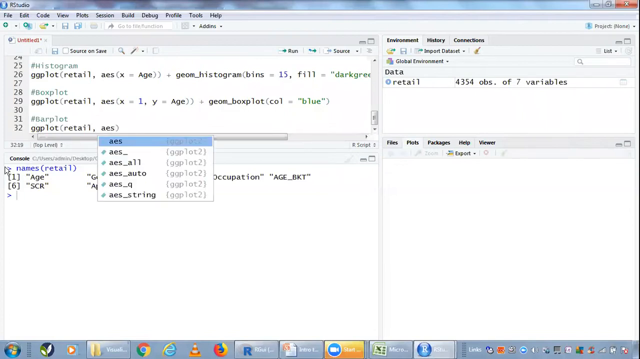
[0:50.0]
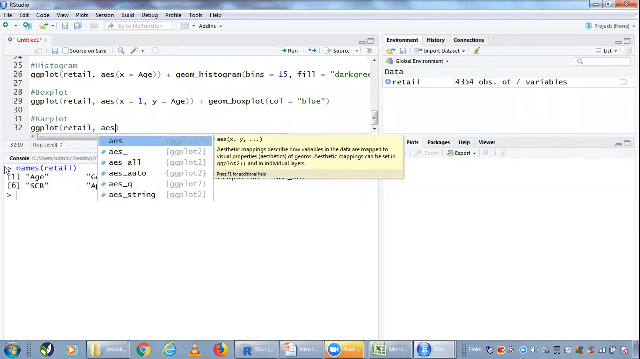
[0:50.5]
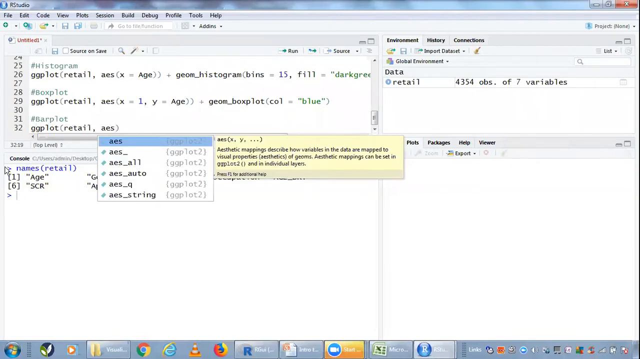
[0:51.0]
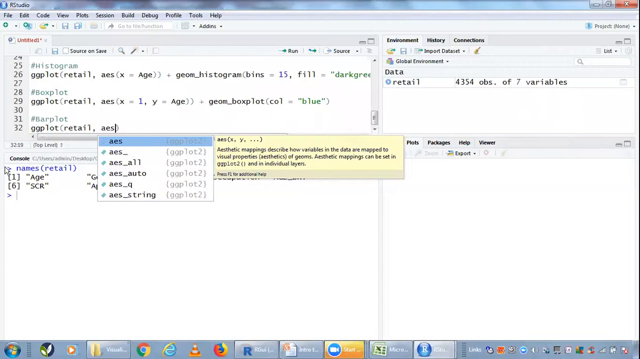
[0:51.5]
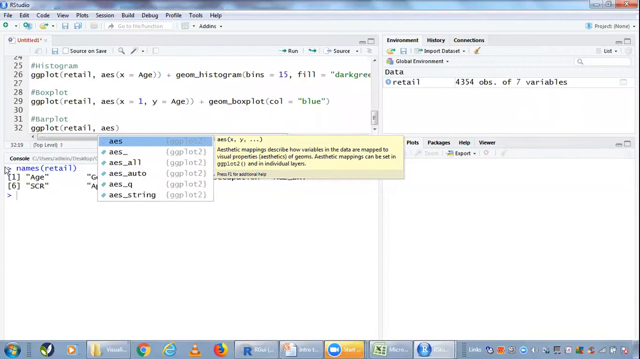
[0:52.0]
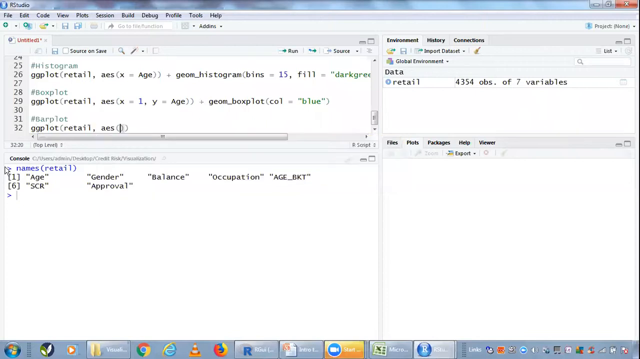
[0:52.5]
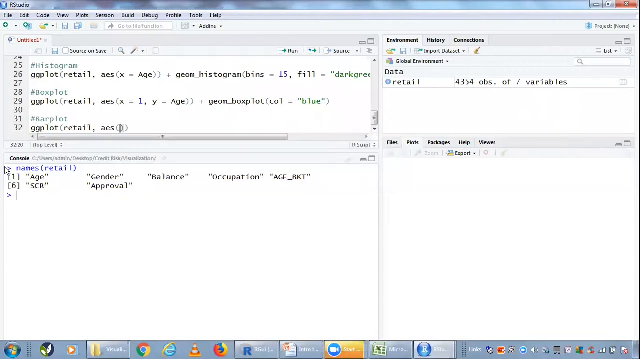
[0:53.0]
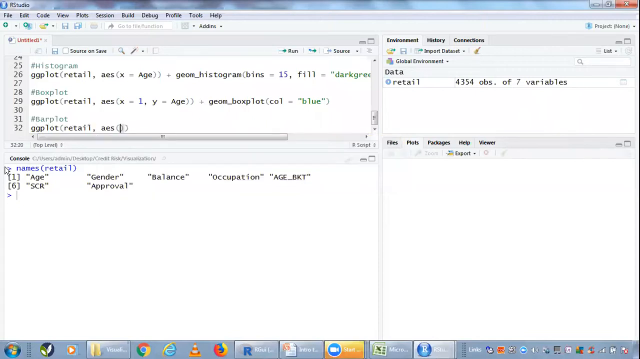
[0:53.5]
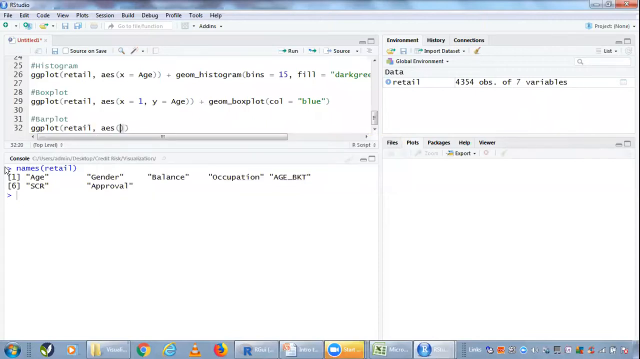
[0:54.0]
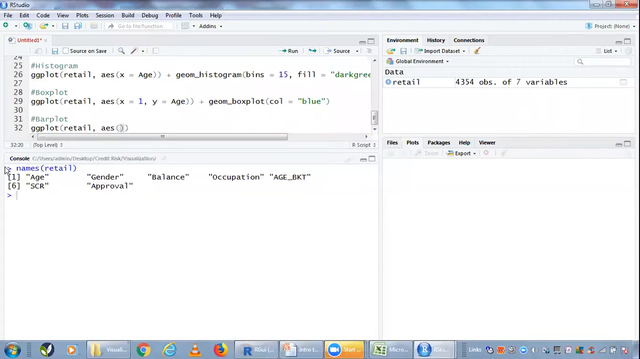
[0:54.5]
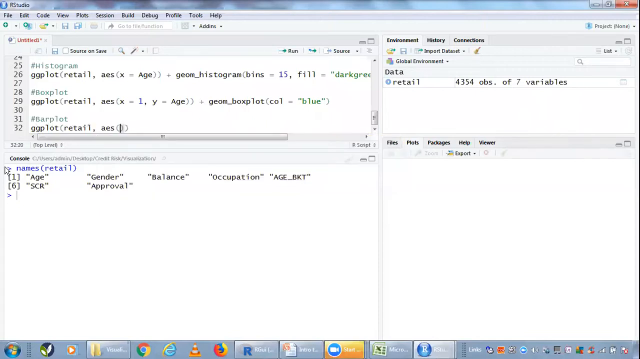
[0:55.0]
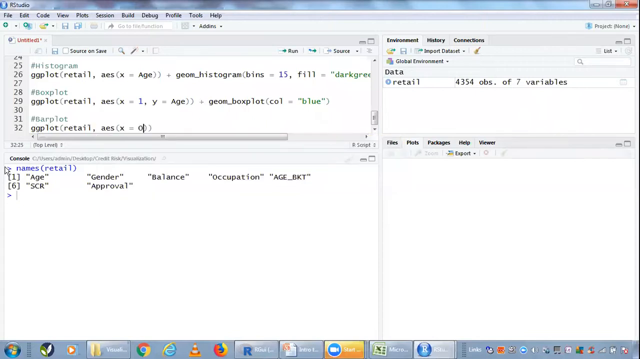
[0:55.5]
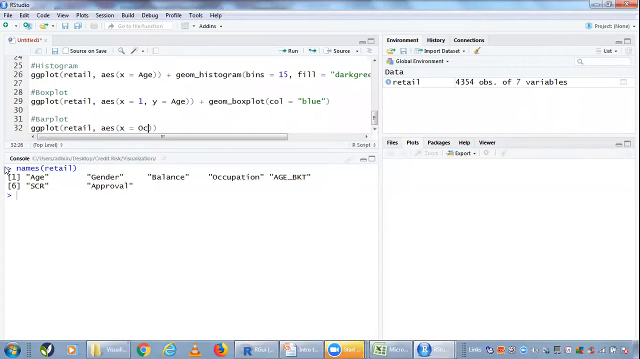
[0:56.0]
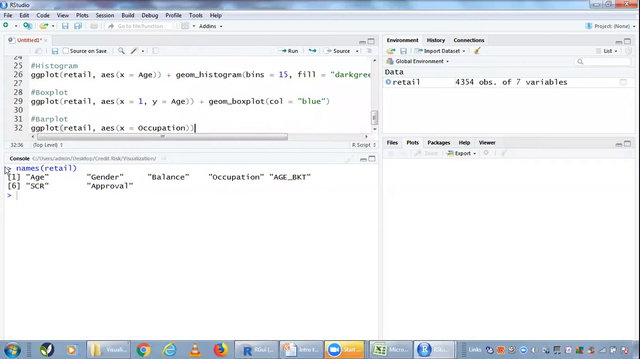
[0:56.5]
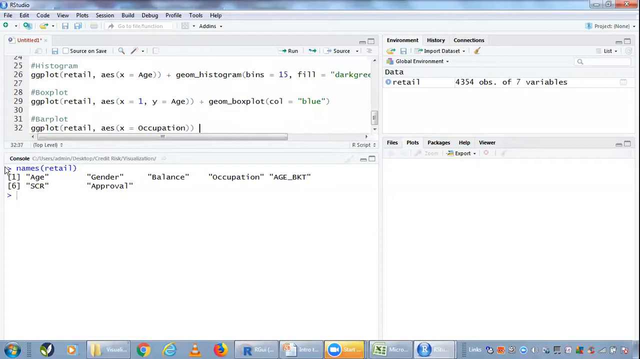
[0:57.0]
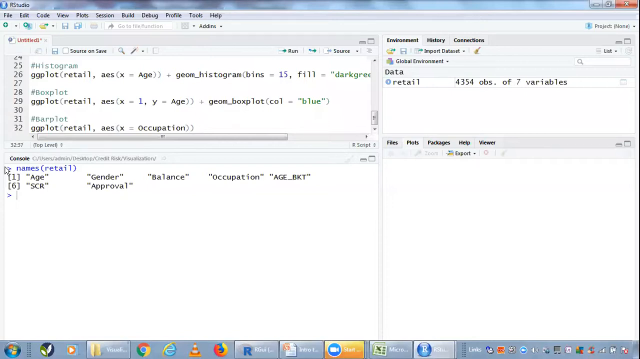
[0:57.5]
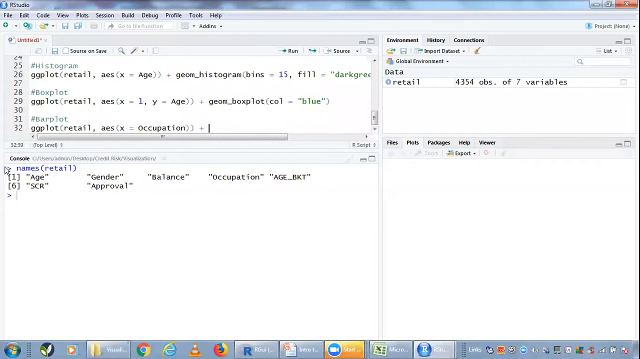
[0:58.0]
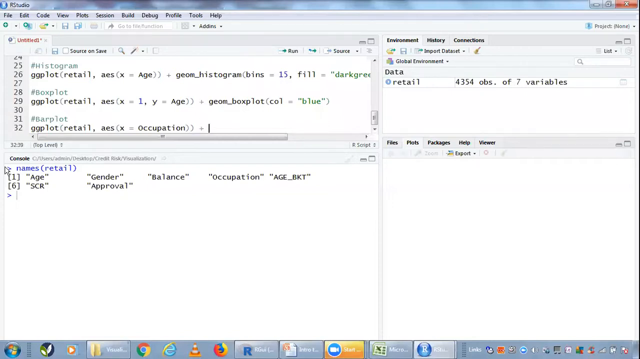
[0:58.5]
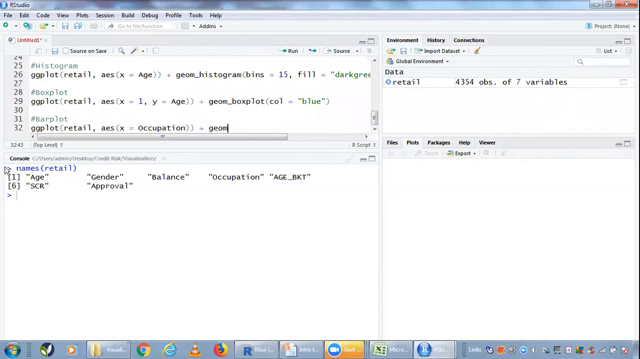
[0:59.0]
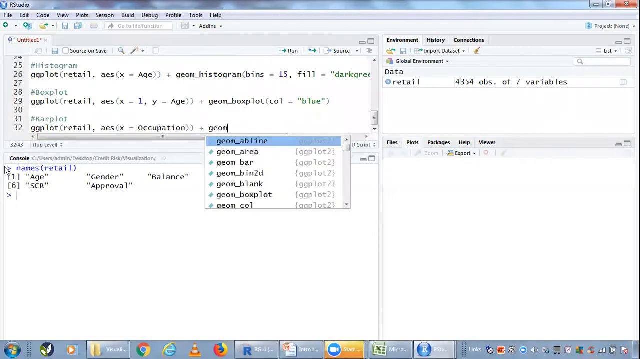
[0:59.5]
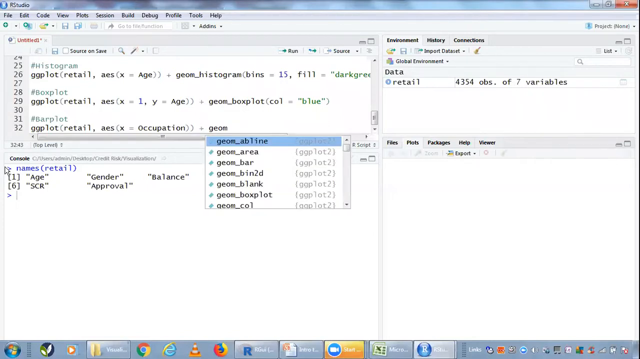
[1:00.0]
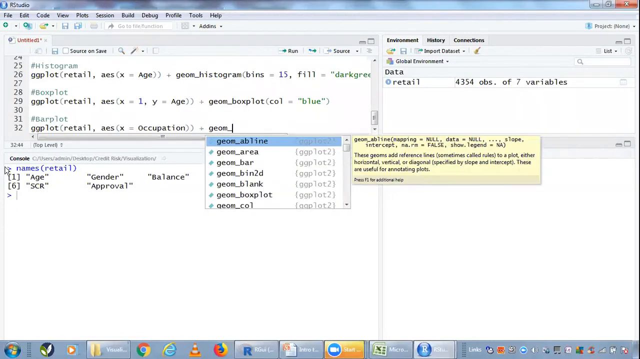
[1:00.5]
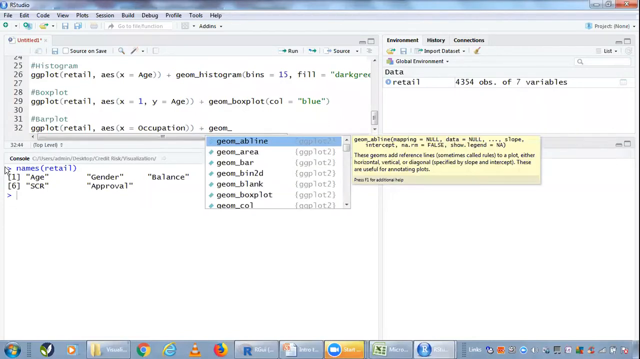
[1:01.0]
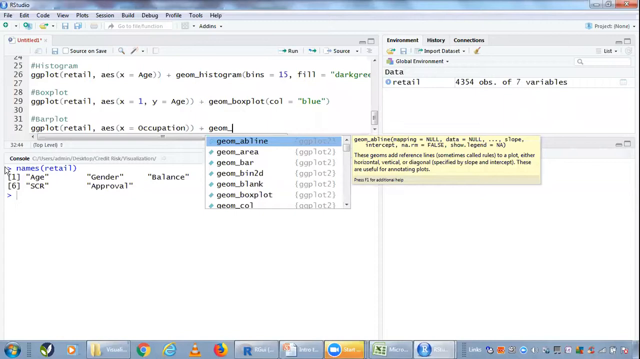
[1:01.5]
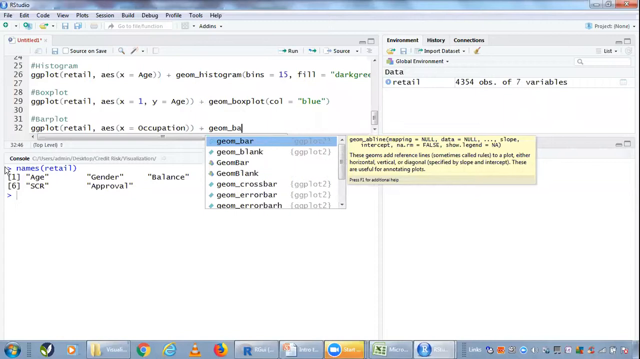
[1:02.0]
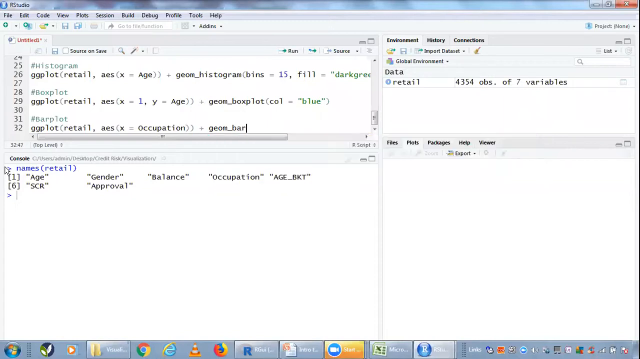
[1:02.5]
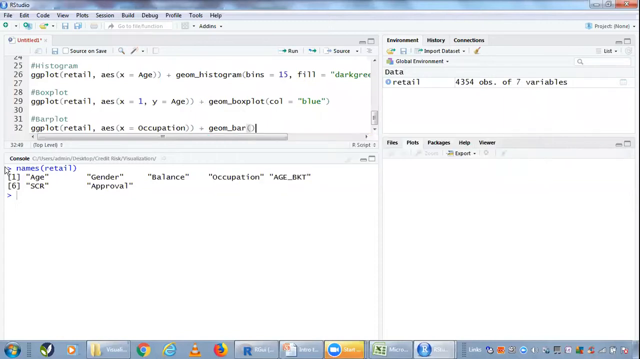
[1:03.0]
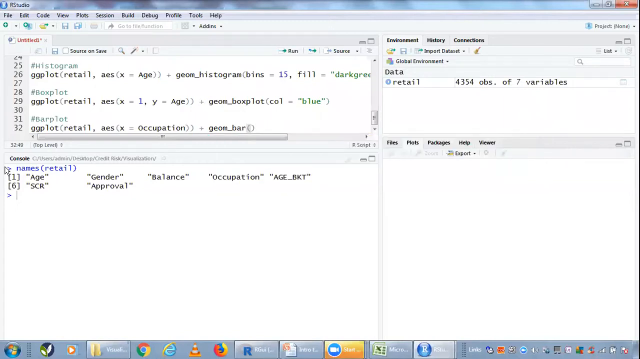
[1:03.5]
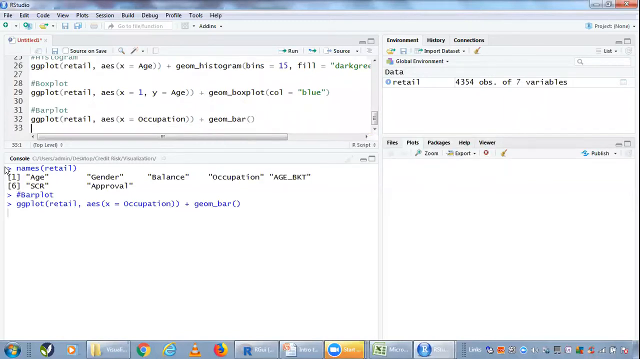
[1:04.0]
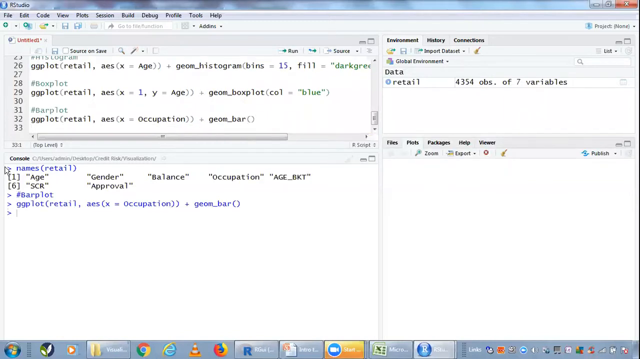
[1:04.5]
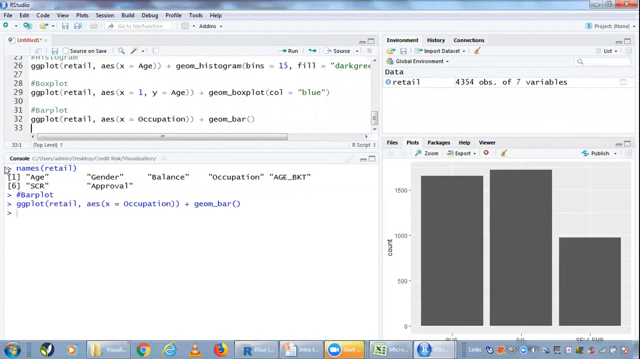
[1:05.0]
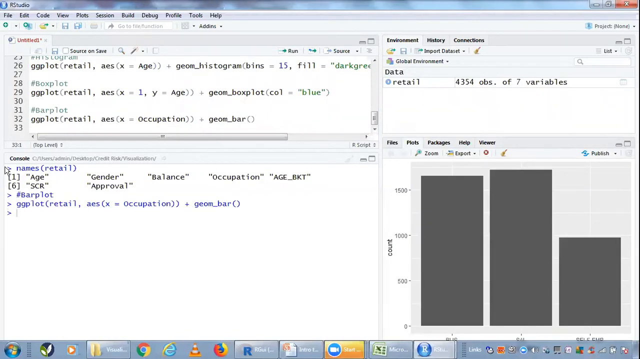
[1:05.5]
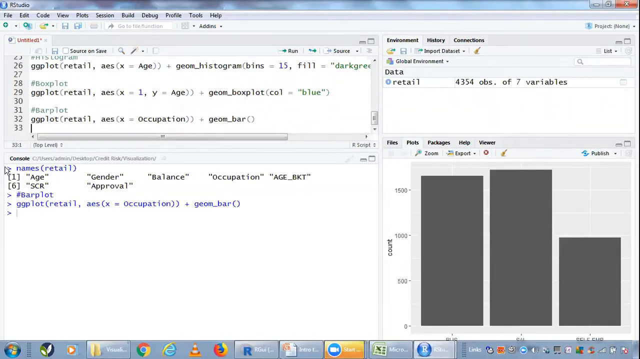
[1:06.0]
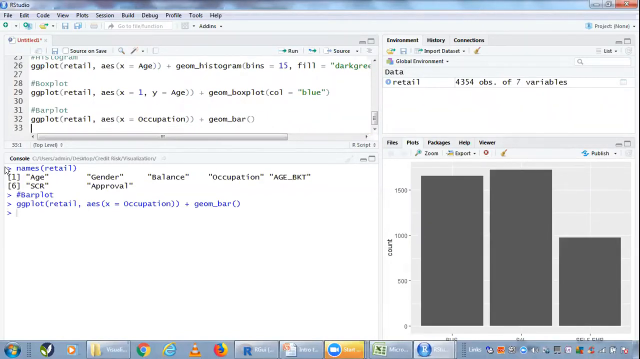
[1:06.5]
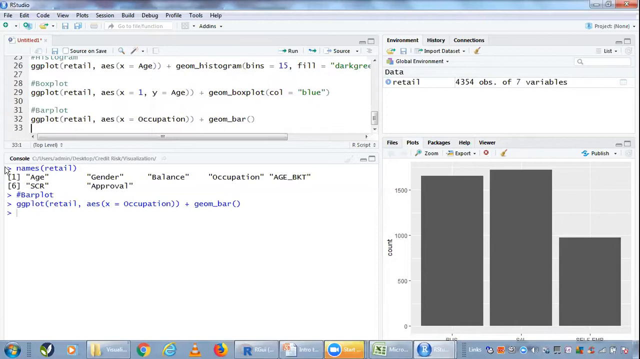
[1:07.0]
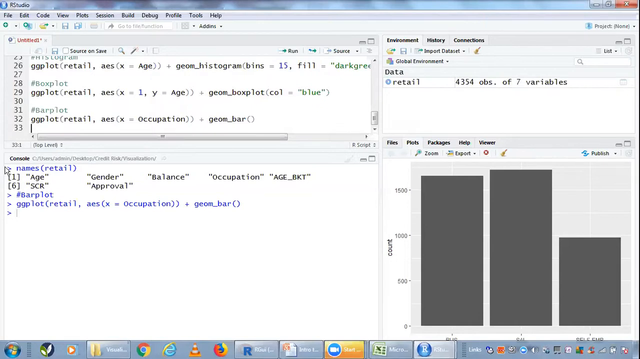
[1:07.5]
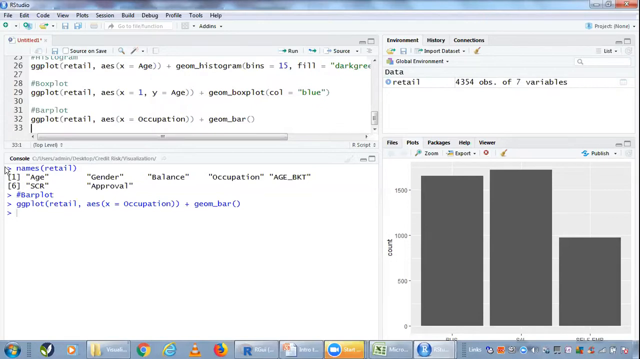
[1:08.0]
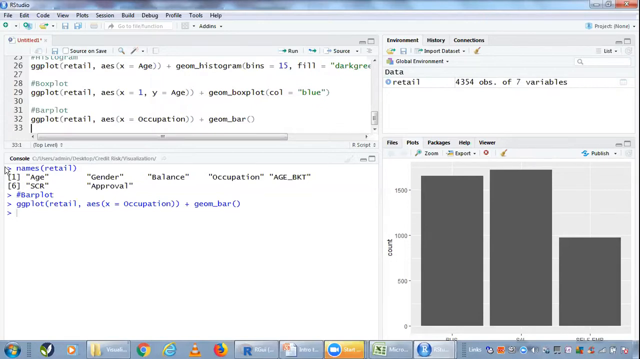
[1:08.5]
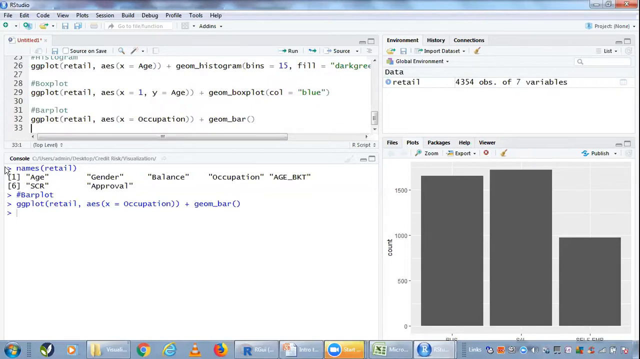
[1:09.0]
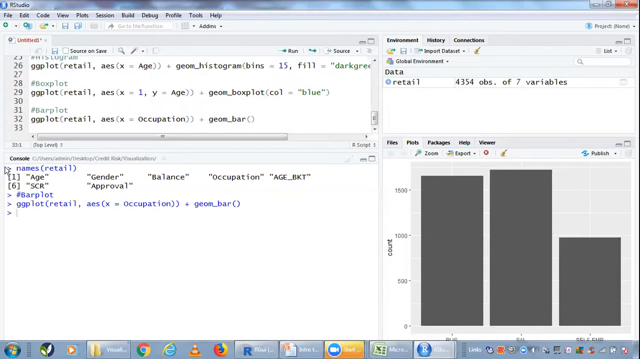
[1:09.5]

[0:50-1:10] In the top left panel titled "Untitled", the user has typed "ggplot retail, aes" on line 32. After "aes" is written, a small dropdown menu pops up with what looks like different autofill options containing "aes". The user creates another set of parentheses and, inside them next to "aes", writes "x = occupation". They put a plus sign outside the parentheses and type "geom_"; a pop-up menu of autofill suggestions appears, but the user just types "bar", adds a set of parentheses and hits Enter. Two lines of text are added in the console window: "#barplot" and, underneath, "ggplot(retail, AES ( X = occupation)) + geom_bar()". In the bottom right panel labeled "Plots", a bar graph now appears with three gray bars: the first at around 1,700 count, the second at around 1,900 count, and the third a little less than 1,000 count.